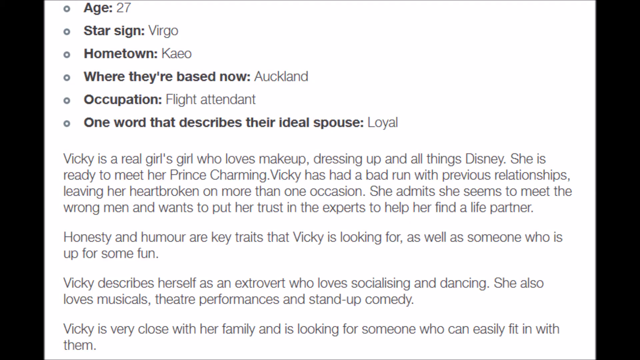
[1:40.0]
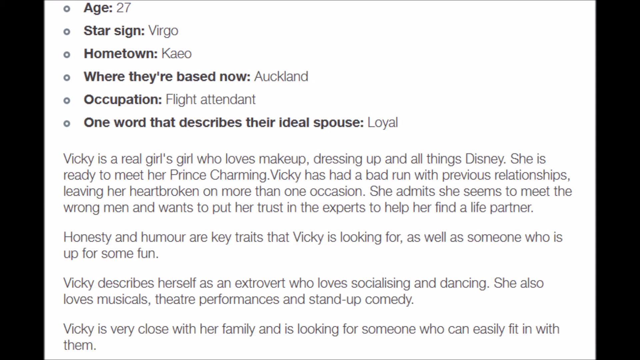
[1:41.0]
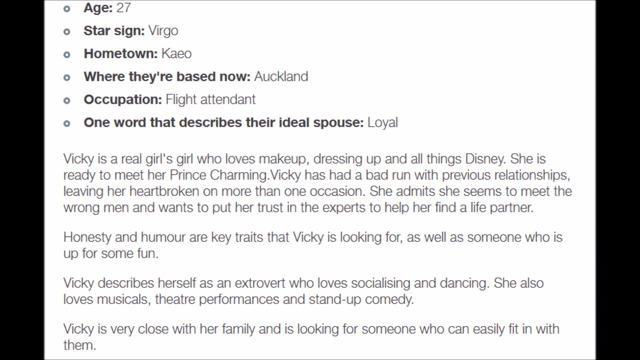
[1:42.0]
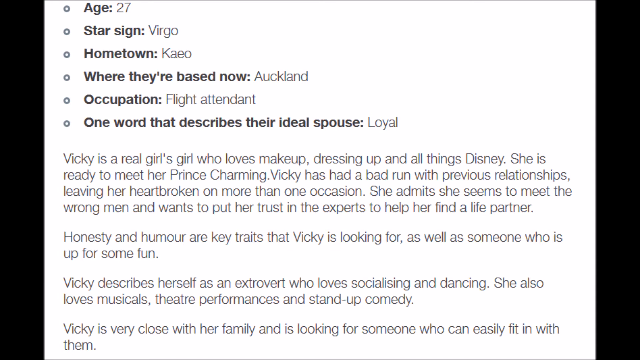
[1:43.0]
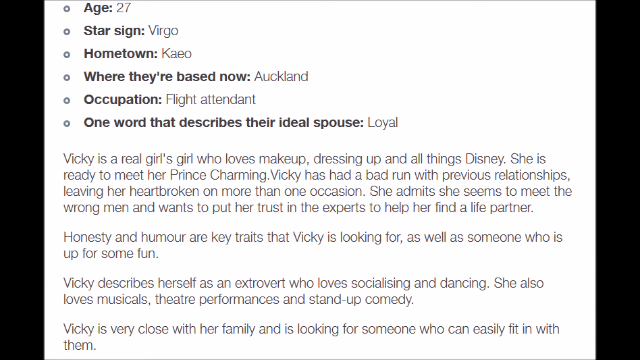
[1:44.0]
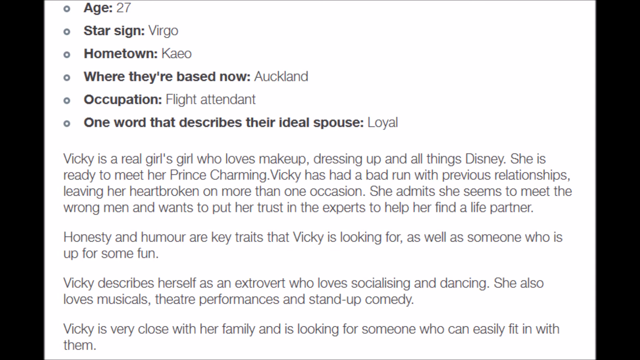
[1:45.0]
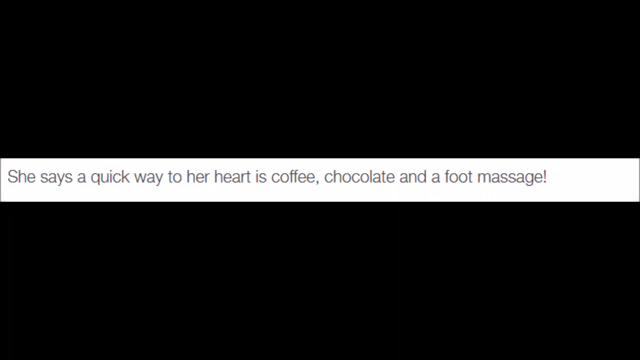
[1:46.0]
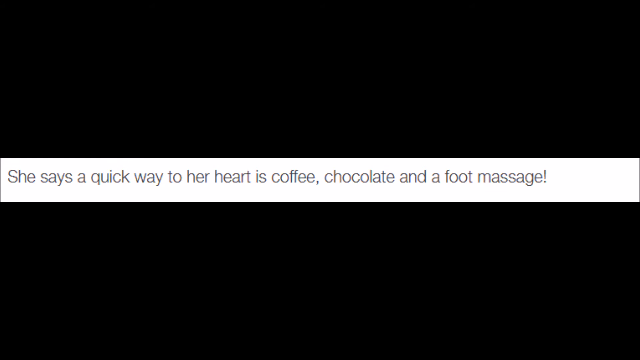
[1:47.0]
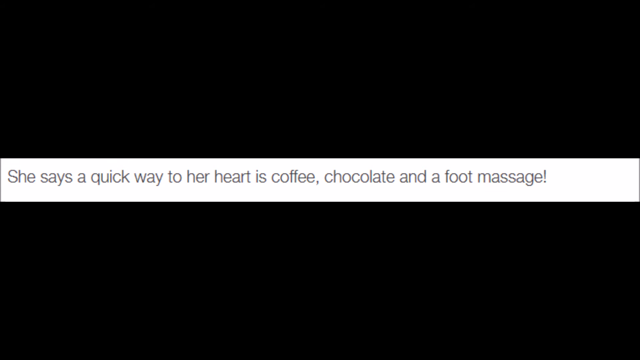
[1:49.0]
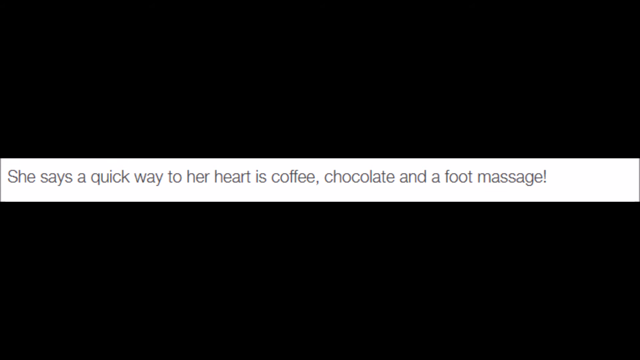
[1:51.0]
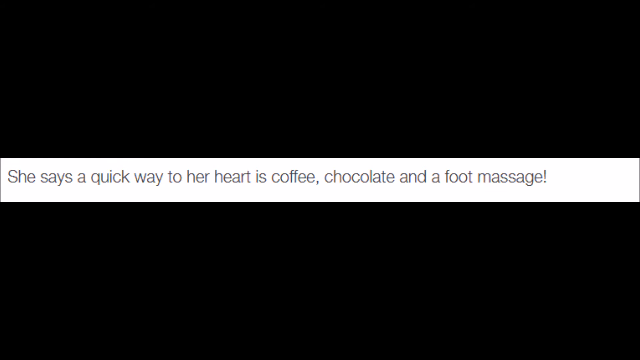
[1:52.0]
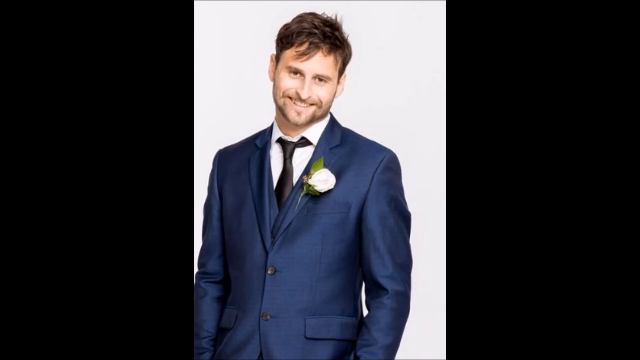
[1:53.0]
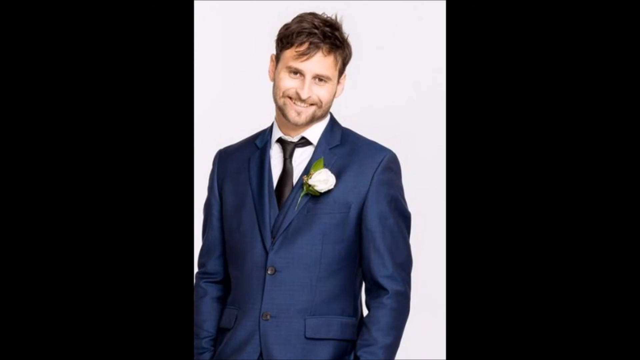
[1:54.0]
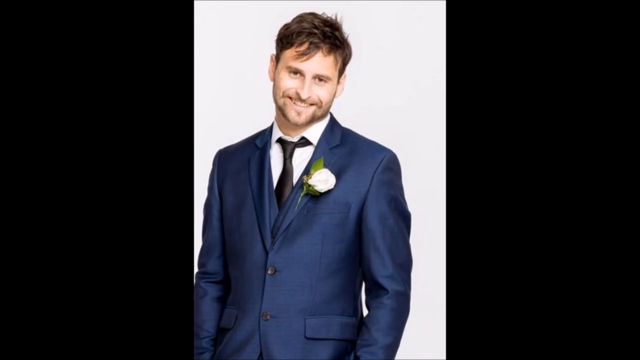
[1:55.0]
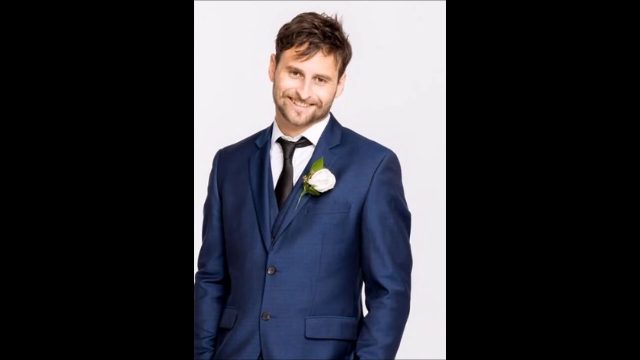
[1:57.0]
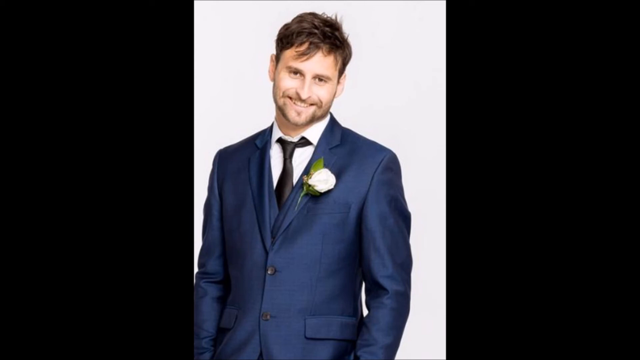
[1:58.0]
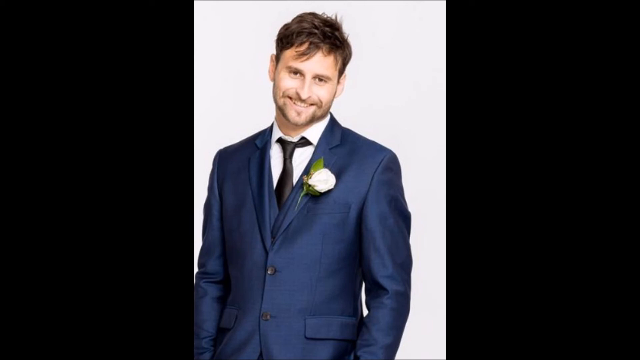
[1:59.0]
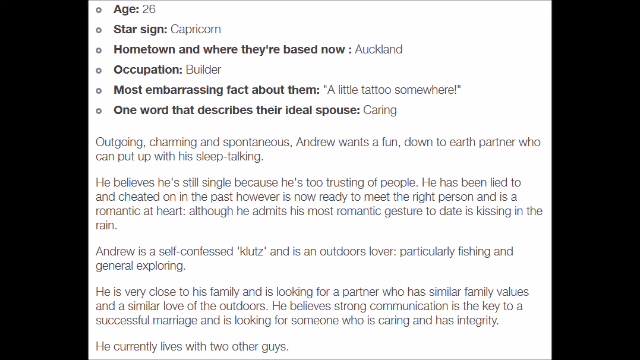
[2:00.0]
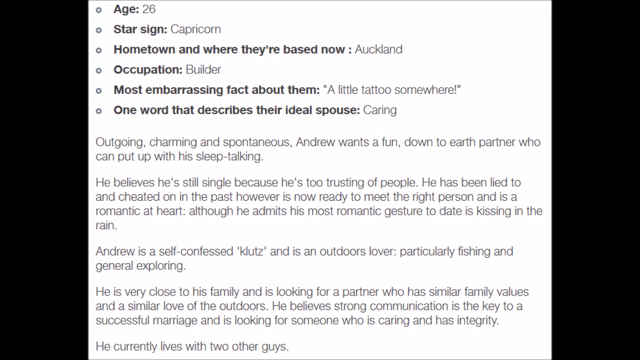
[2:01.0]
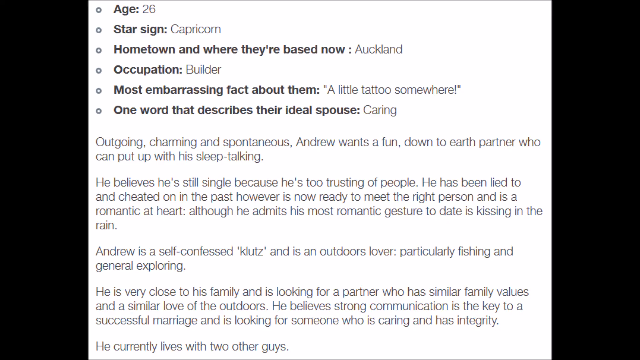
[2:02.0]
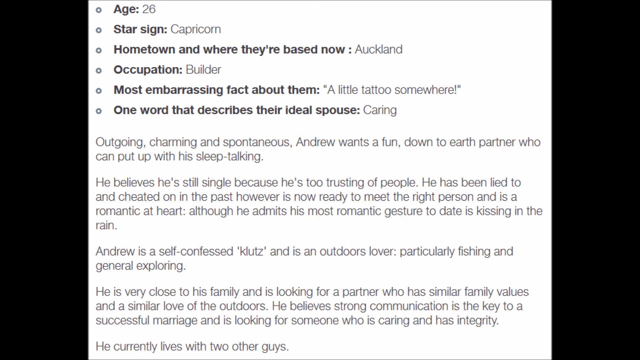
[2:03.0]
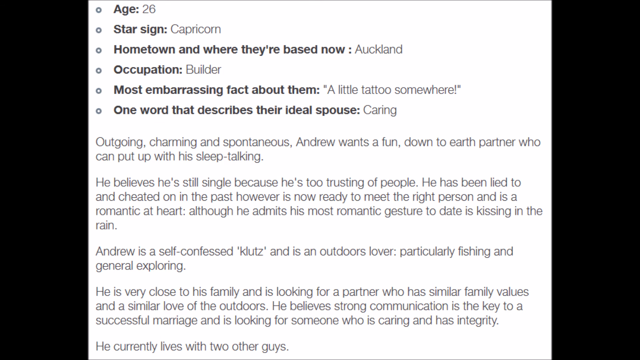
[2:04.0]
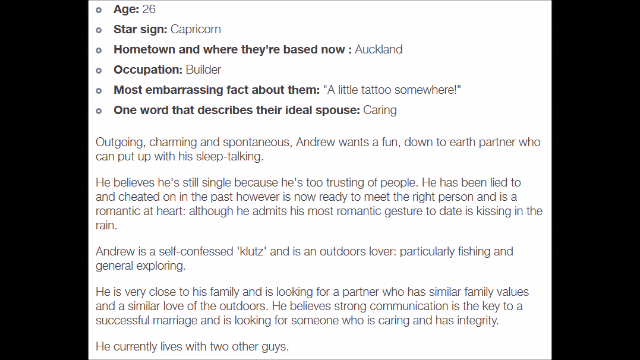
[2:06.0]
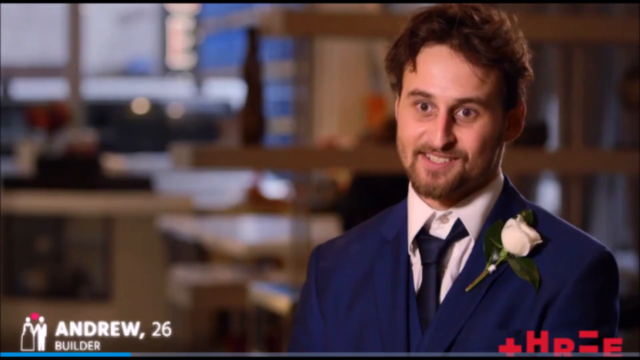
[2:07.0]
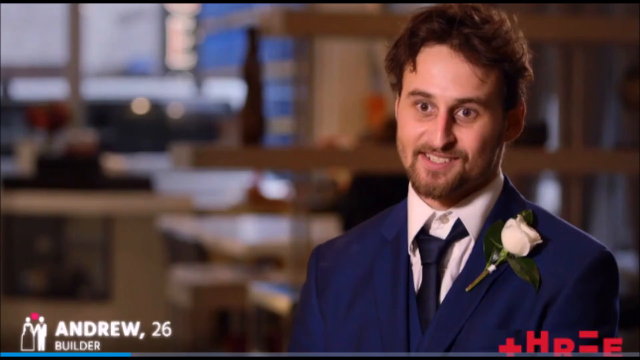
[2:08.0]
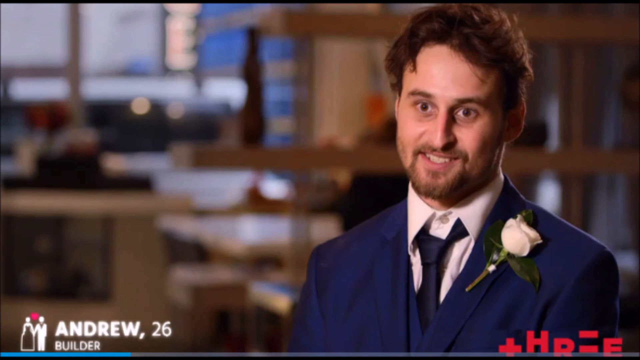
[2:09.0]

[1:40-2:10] A description of a girl reads "age 27", star sign "Virgo", based now in "Auckland", occupation "flight attendant", and one word describing the ideal spouse, "loyal". It mentions makeup, dressing up and Disney, and reads "she is ready to meet her Prince Charming, Wiki has had a bad run with previous relationships", leaving her heartbroken on more than one occasion. It says she seems to meet the wrong man and wants to put her trust in experts to help her find a life partner, that Wiki describes herself as an extrovert, and that "Wiki is very close with her family and is looking for someone who can easily fit in with them". It adds "a quick way to her heart is coffee, chocolate and foot massage". Next comes a picture of a man with his description: age 26, star sign Capricorn, based in Auckland, a builder, most embarrassing fact "a little tattoo somewhere", and one word describing the ideal spouse, "caring". The text says he is outgoing, charming and spontaneous and believes he is still single because he is too trusting of people. It also says Andrew confesses he is klutzy, that he loves fishing and exploring, and that he is very close with his family and is looking for a partner with similar family values. The picture of Andrew, 26, in a blue suit stays on screen.